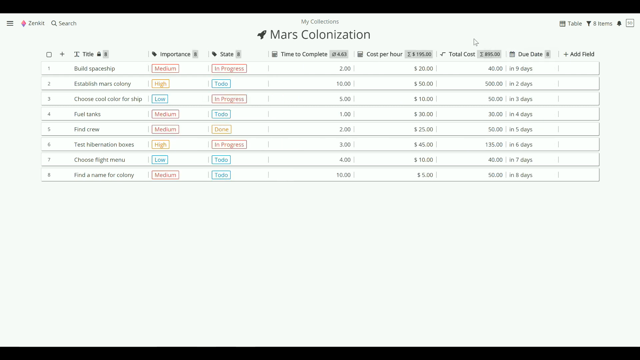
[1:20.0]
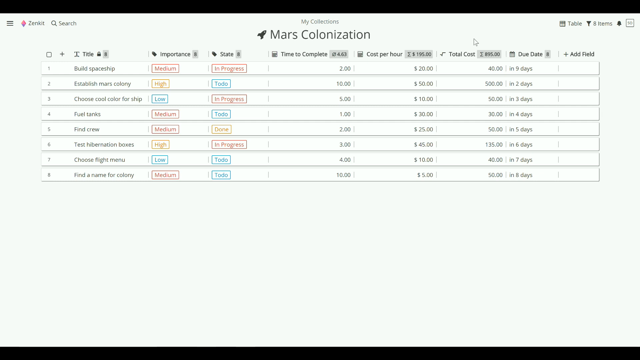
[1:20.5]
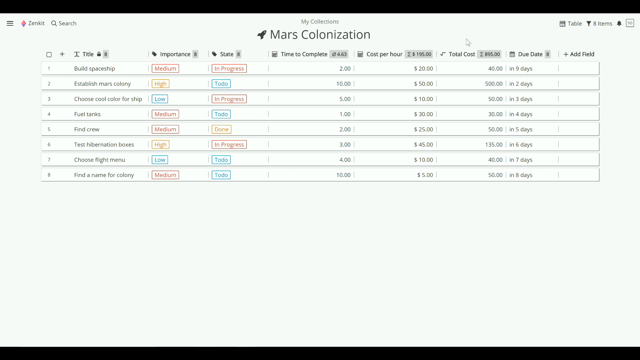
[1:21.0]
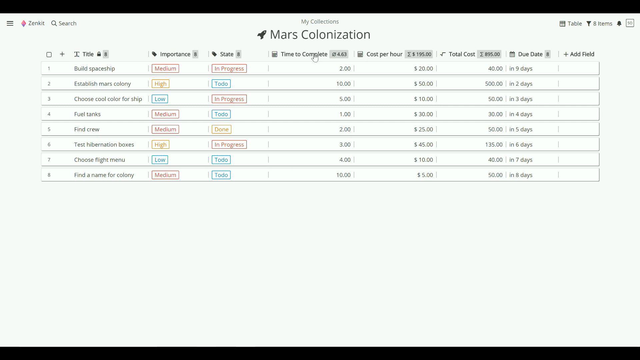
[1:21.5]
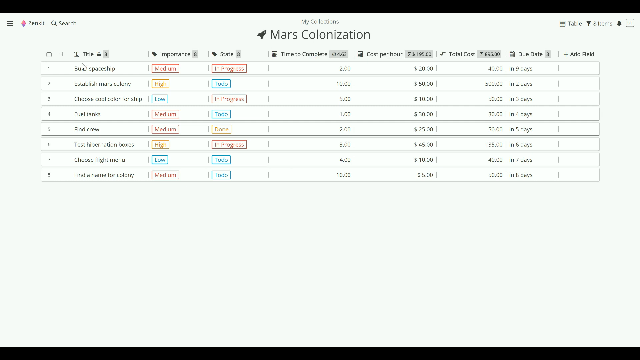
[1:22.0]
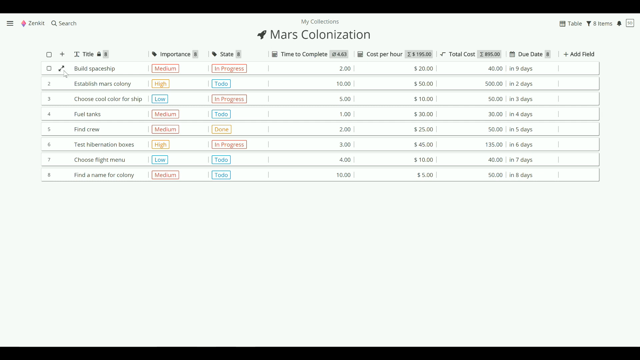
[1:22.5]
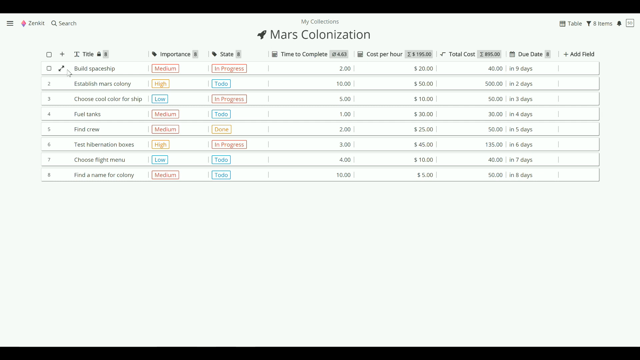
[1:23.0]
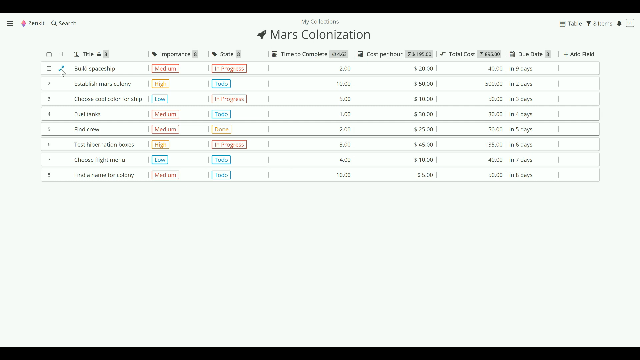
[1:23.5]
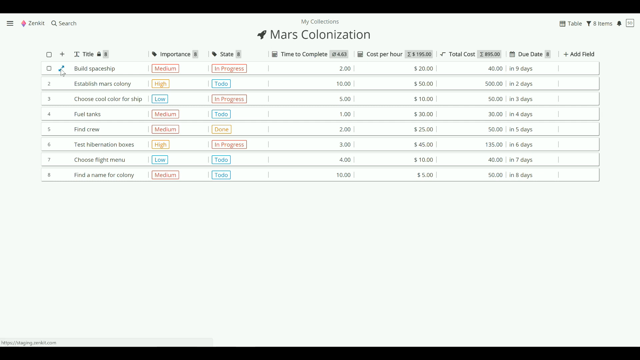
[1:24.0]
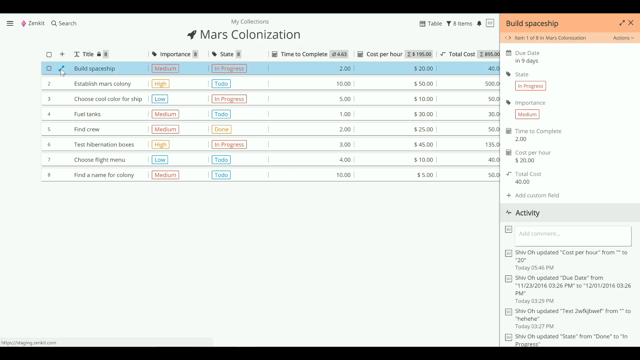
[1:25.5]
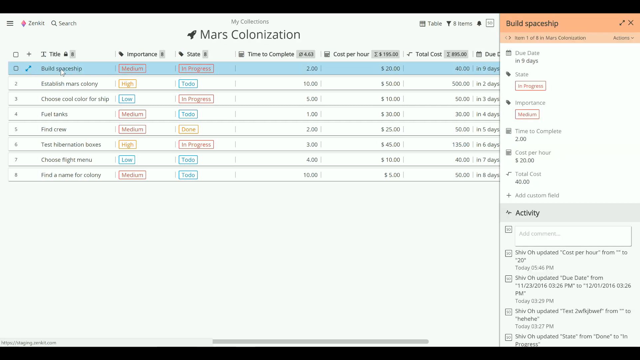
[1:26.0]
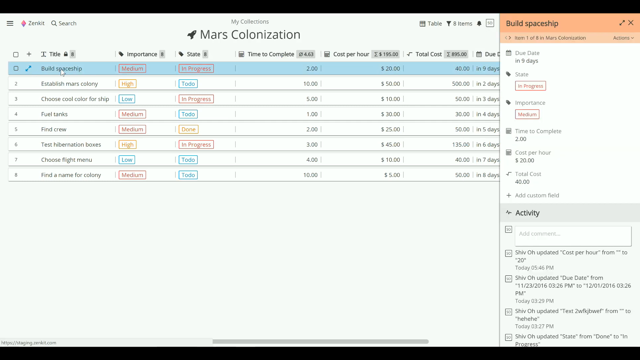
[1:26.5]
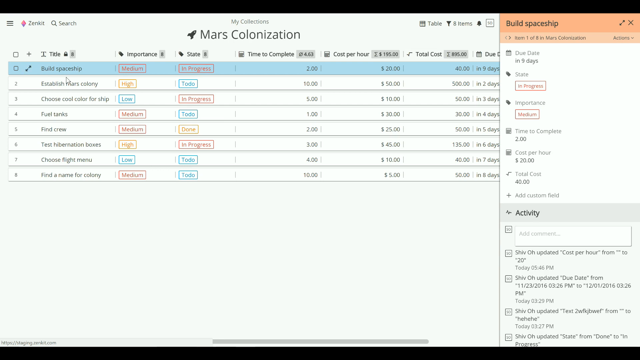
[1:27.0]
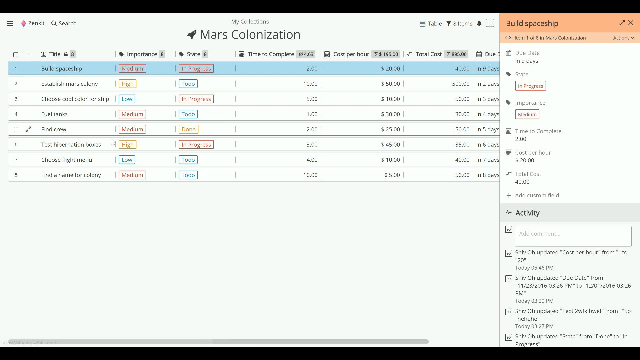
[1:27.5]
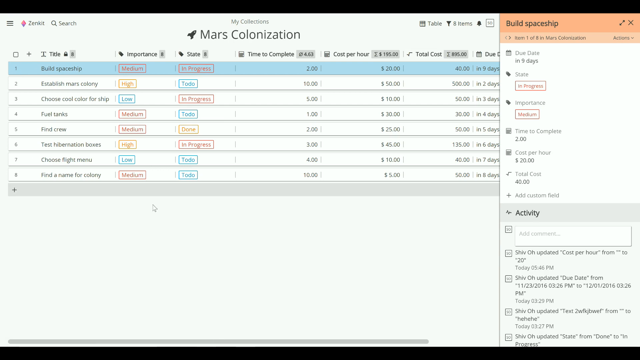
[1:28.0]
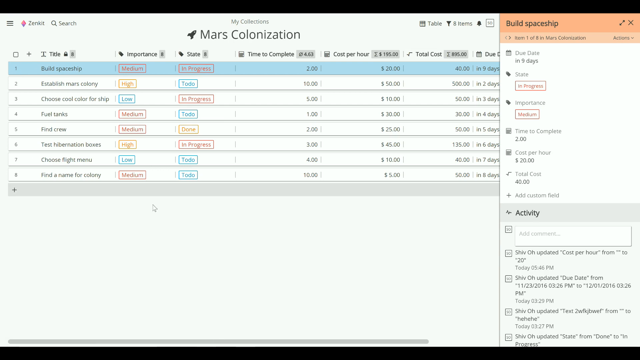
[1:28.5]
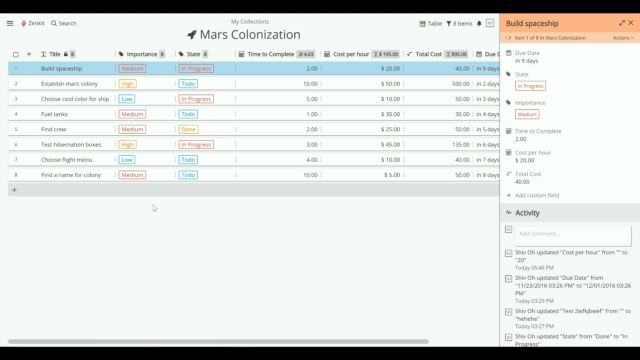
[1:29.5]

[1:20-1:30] The mouse moves over and hovers on the first row. A small icon appears in the second column whenever the mouse is over a row; at this resolution it is hard to tell what it is. With the mouse hovering over it, the icon is blue. Clicking it opens a panel on the right side of the screen for the "Build Spaceship" item, showing a detailed view of that row: the due date, which says it is due in nine days, the state, and the importance. The clicked icon is two arrows coming out from the center, one pointing to the lower left corner and one to the upper right corner, an expand icon; the row has been expanded into a more detailed listing.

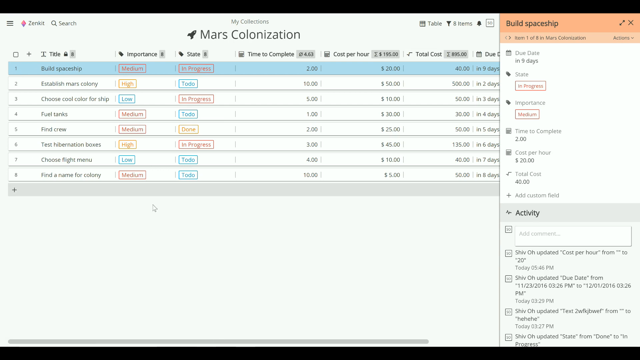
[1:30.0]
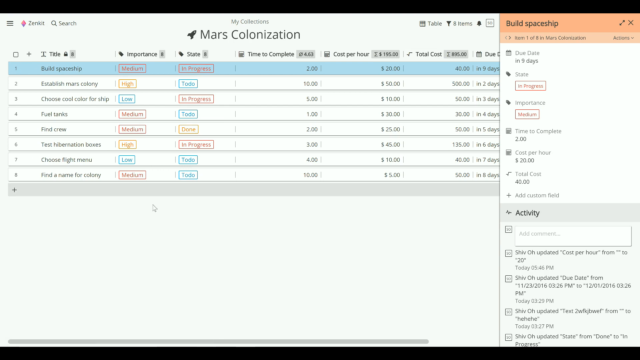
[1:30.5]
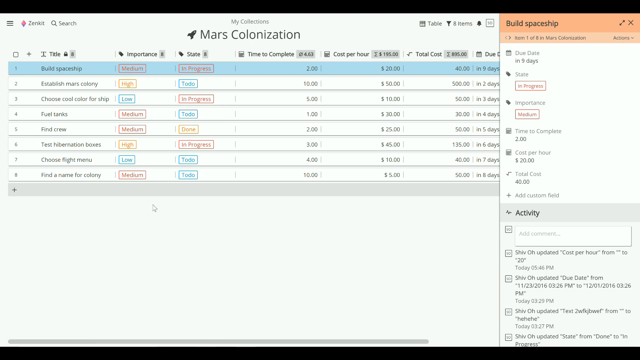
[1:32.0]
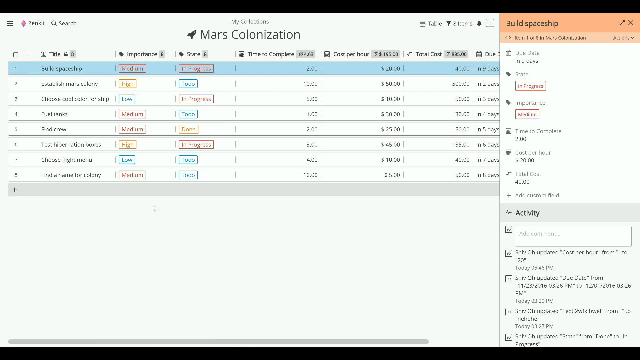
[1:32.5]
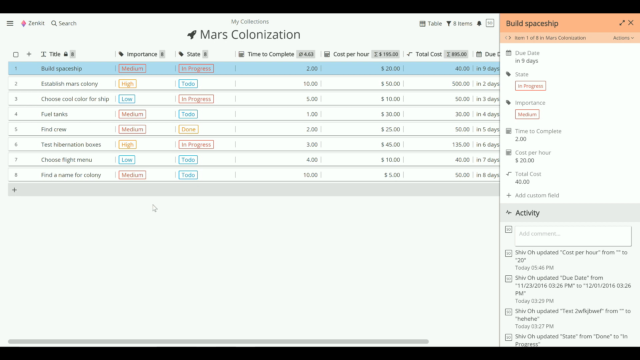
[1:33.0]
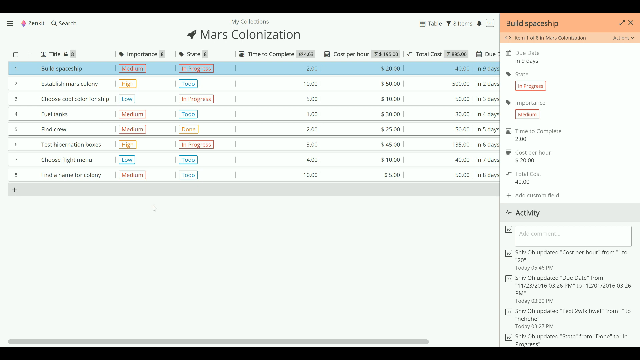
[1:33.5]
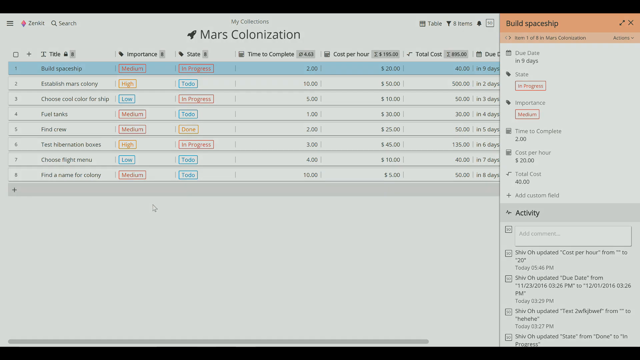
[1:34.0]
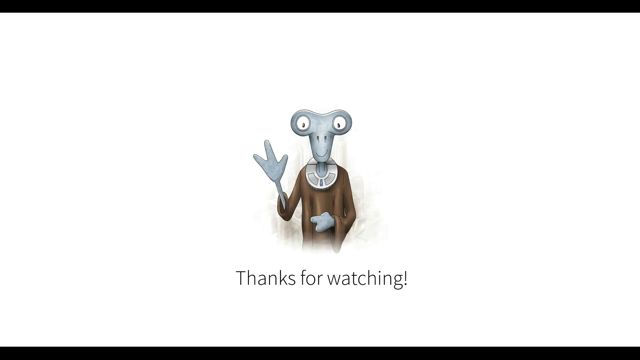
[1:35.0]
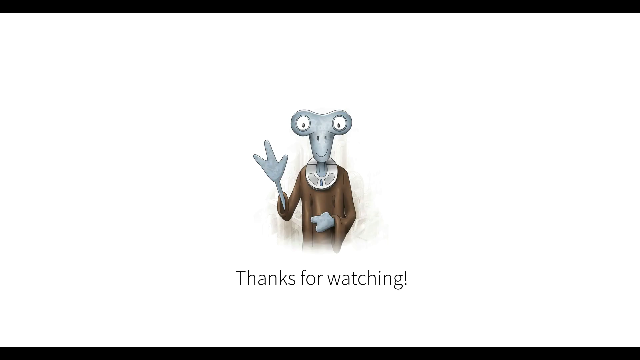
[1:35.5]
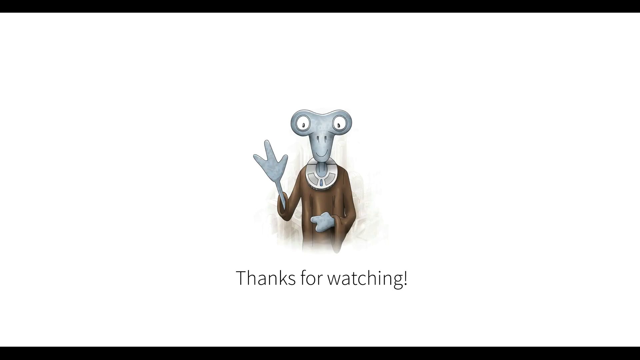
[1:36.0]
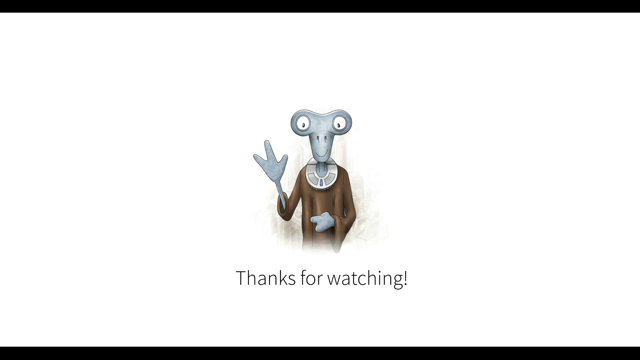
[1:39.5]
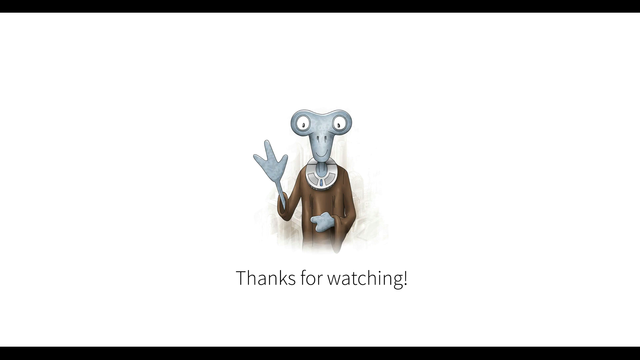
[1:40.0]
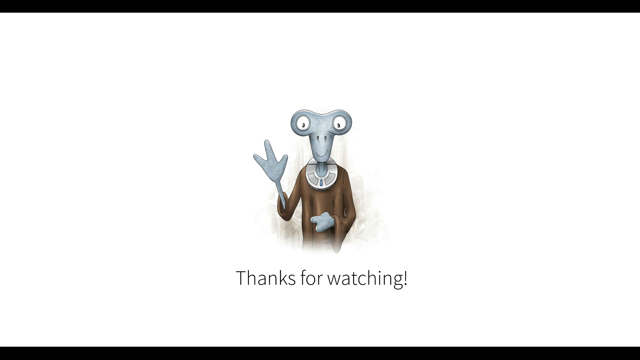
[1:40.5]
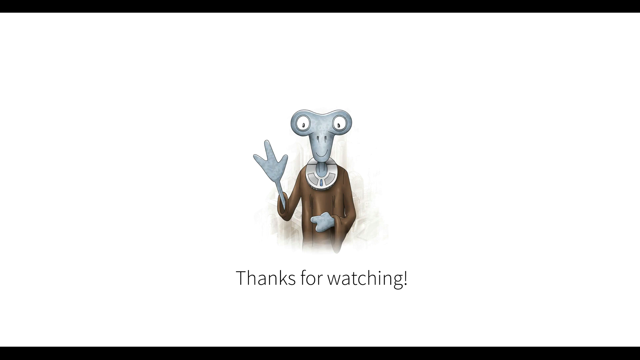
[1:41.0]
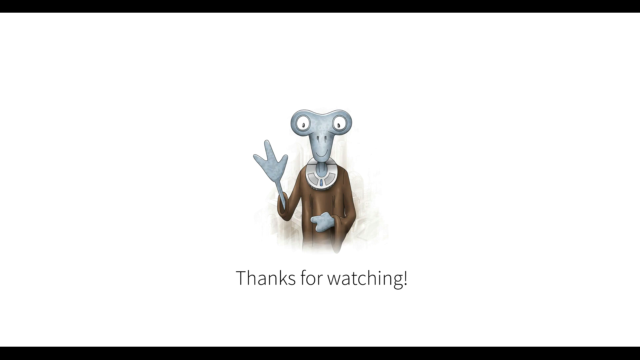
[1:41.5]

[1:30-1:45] The detail listing on the right side of the screen shows much of the same data as the table, more spaced out. The bottom half of the panel is the activity section, listing recent activity on the item with timestamps: someone updated the cost per hour from blank to 20 today at 5.45 p.m., and someone changed the due date from November 23rd to December 1st today at 3.29 p.m. The screen then fades to an illustration of an alien holding up his right hand, with the text "thanks for watching".